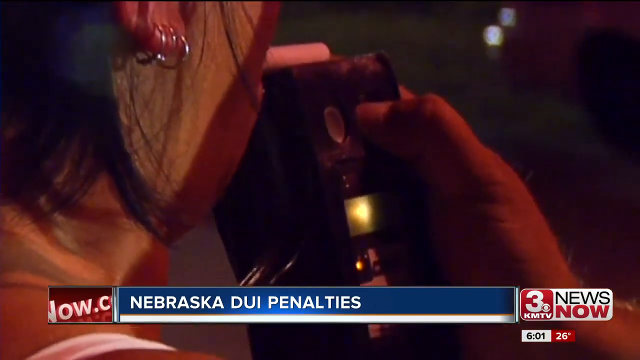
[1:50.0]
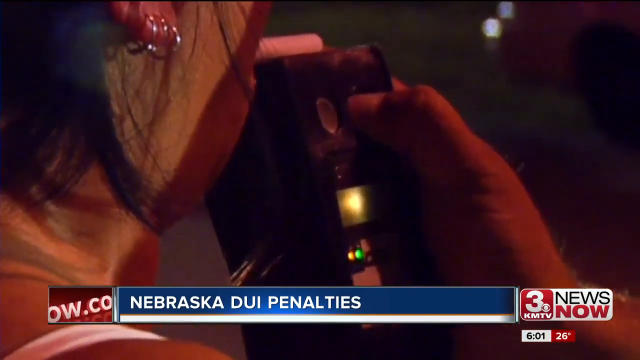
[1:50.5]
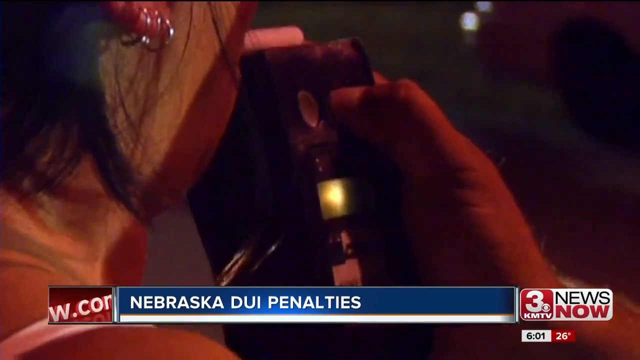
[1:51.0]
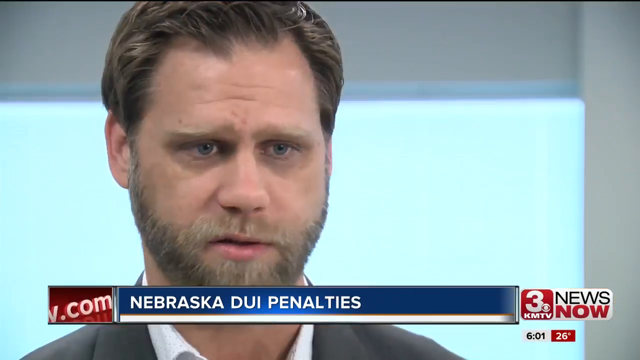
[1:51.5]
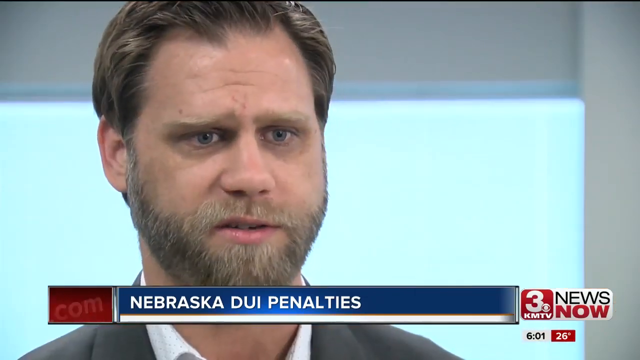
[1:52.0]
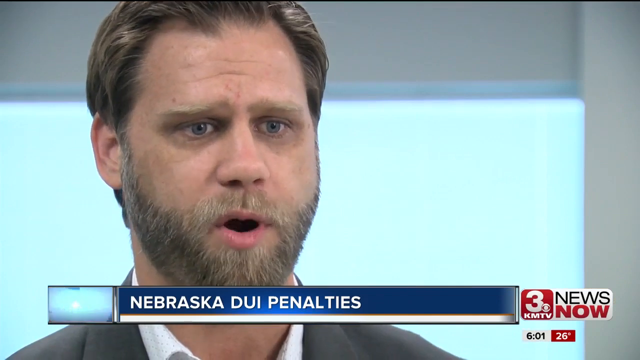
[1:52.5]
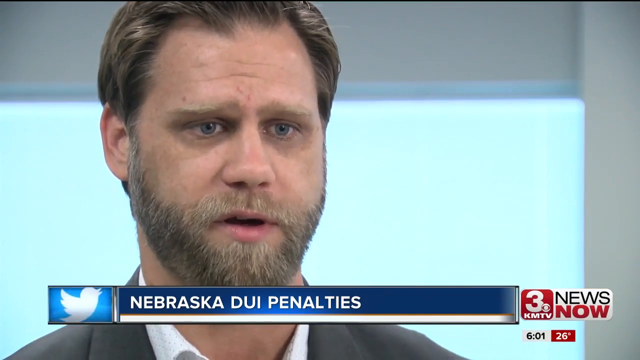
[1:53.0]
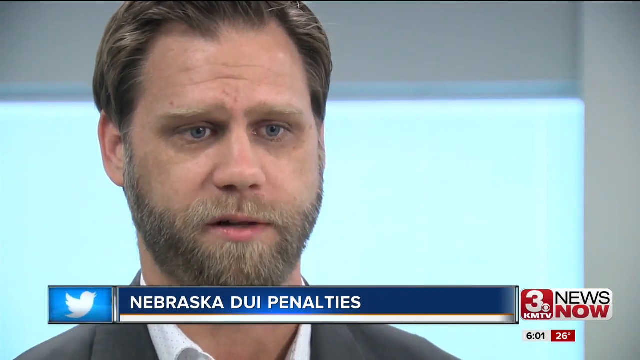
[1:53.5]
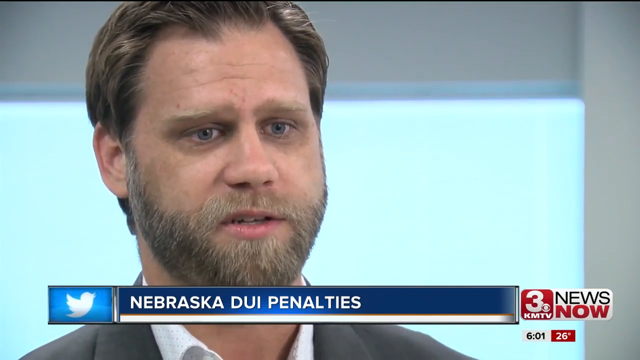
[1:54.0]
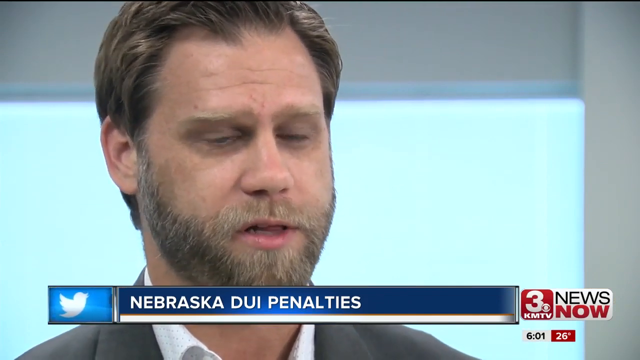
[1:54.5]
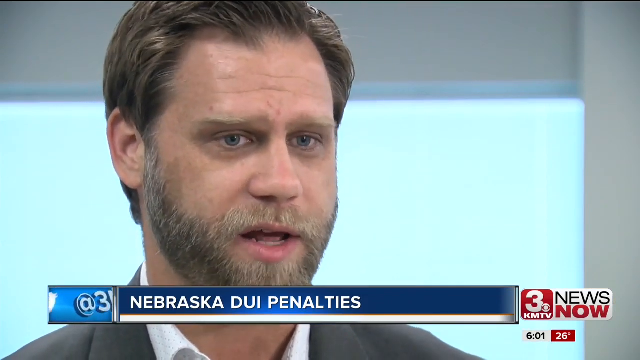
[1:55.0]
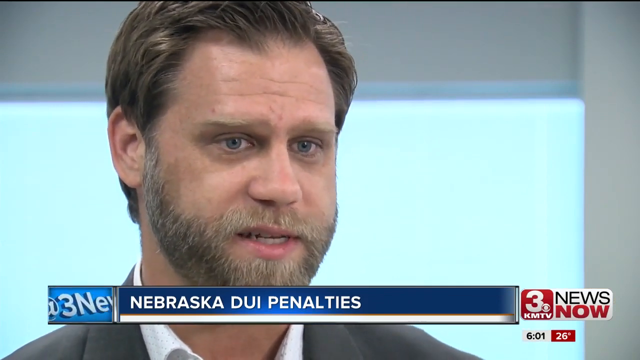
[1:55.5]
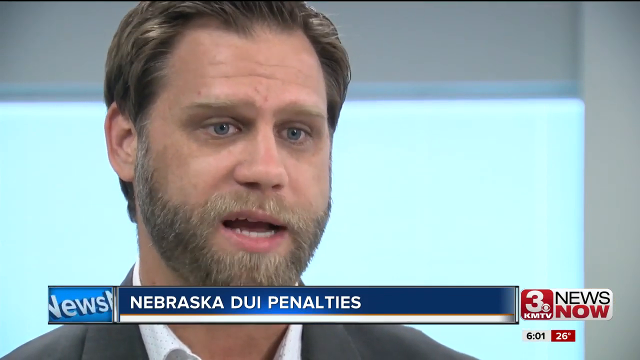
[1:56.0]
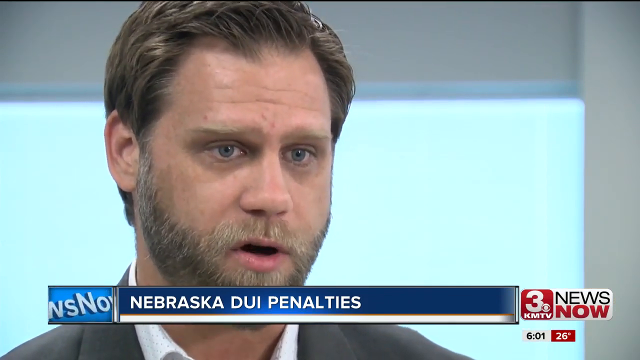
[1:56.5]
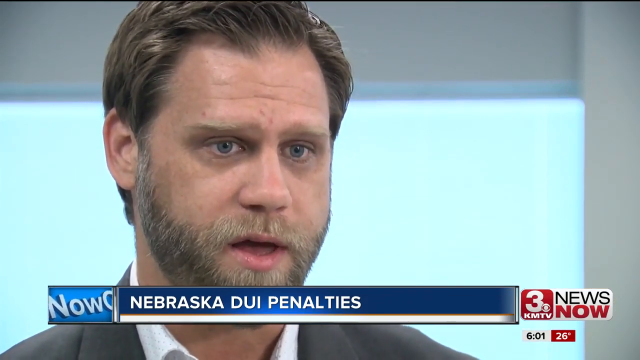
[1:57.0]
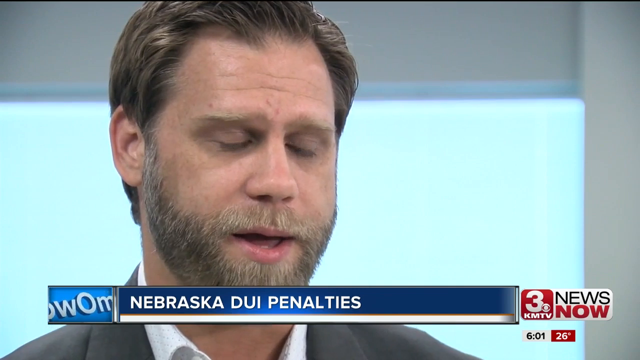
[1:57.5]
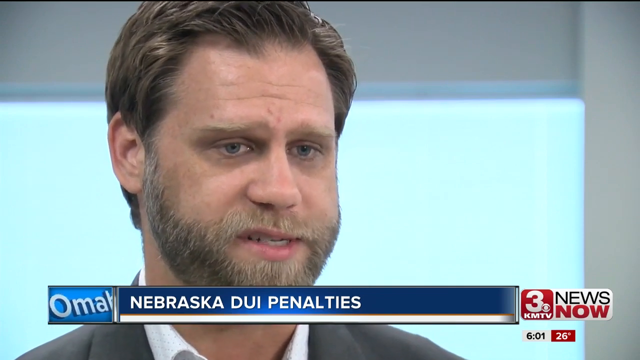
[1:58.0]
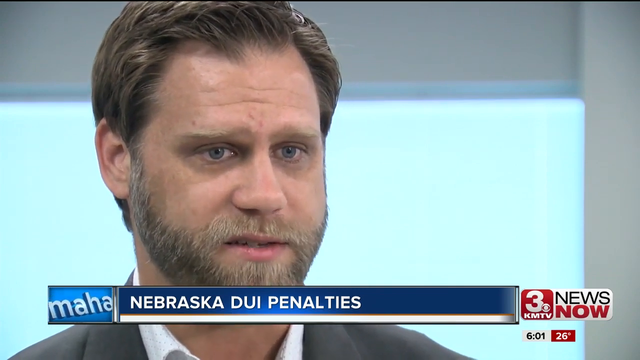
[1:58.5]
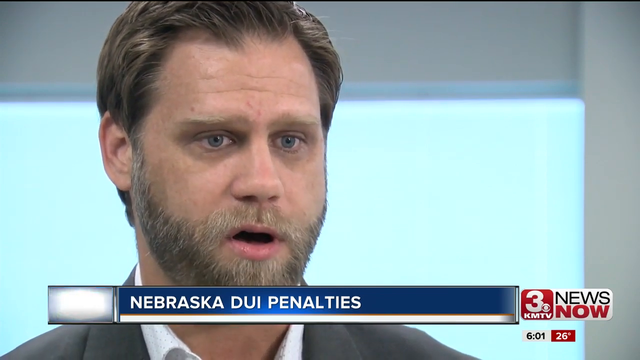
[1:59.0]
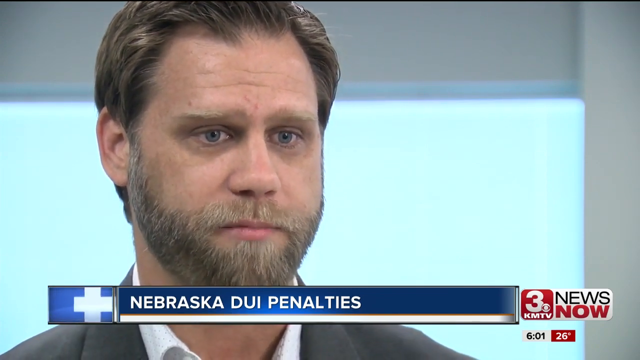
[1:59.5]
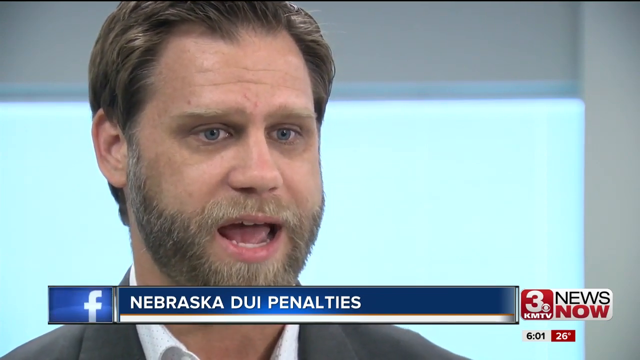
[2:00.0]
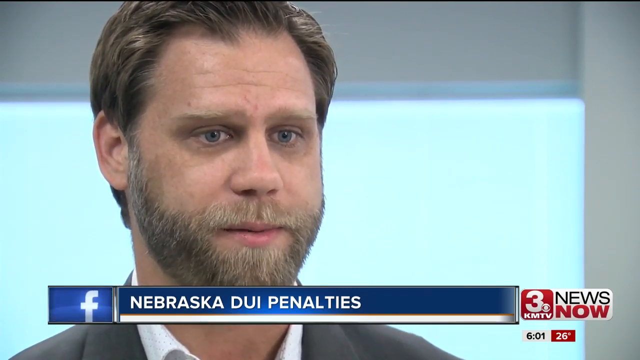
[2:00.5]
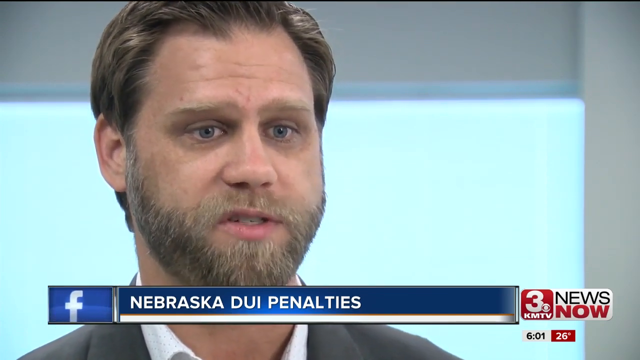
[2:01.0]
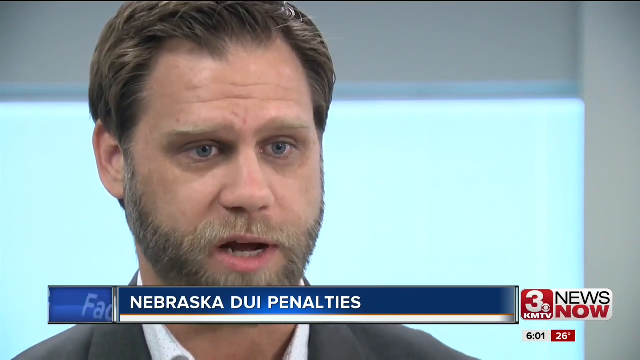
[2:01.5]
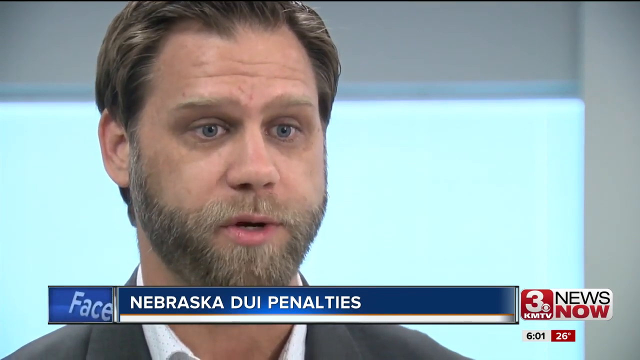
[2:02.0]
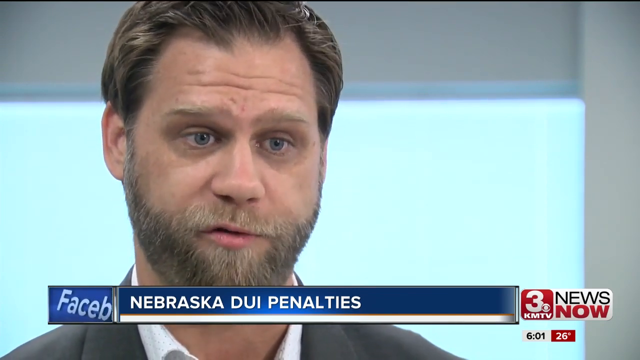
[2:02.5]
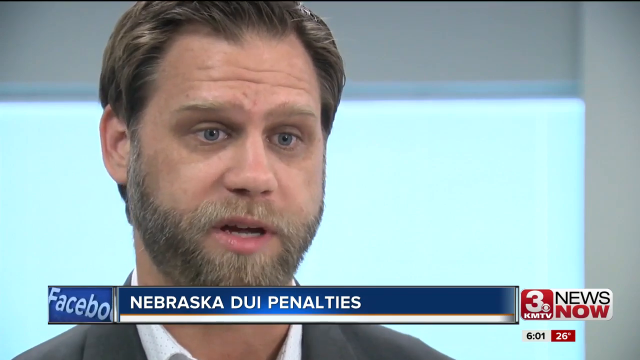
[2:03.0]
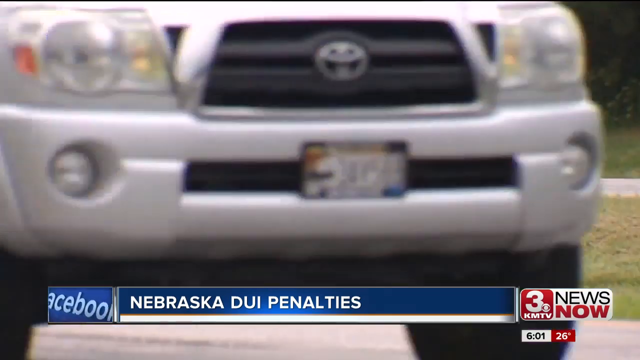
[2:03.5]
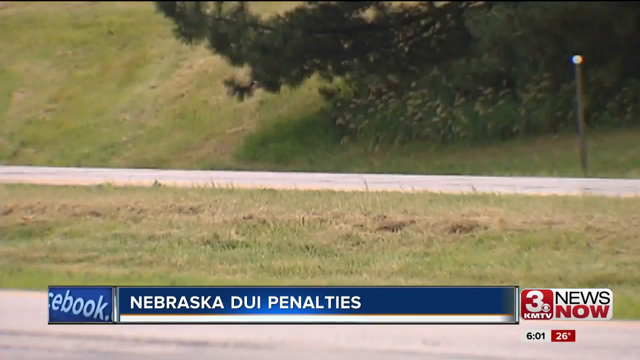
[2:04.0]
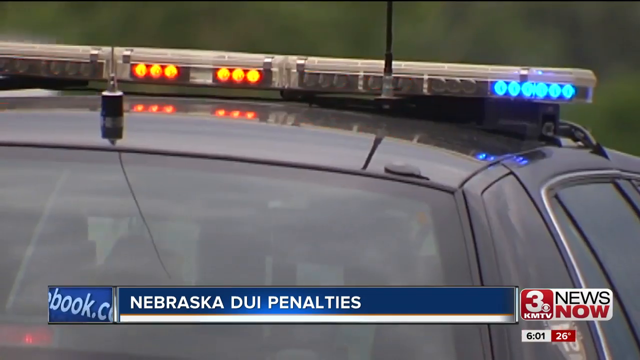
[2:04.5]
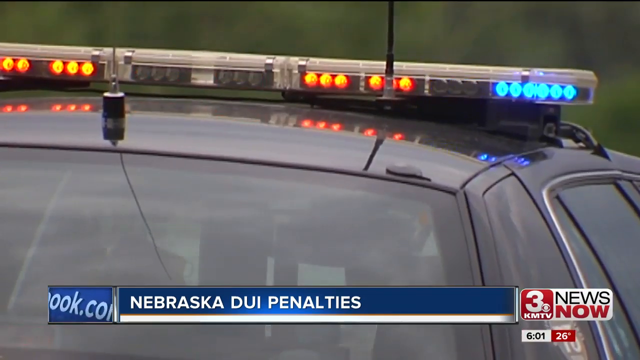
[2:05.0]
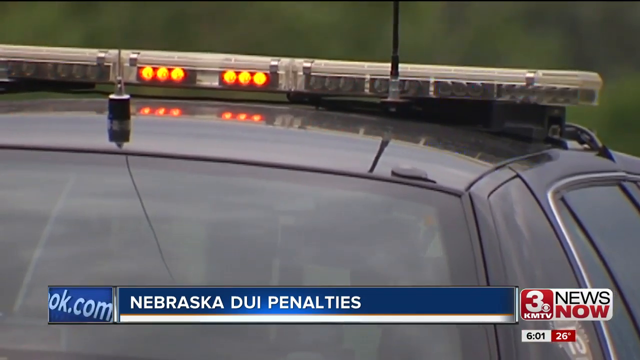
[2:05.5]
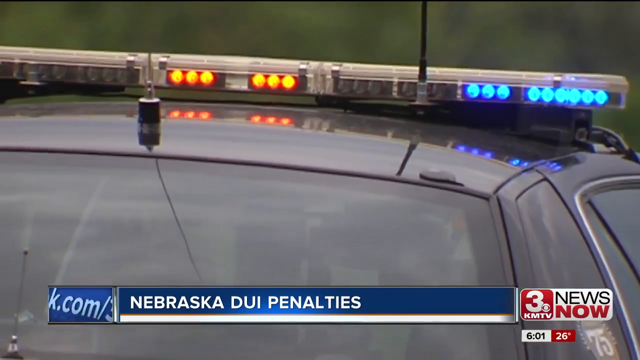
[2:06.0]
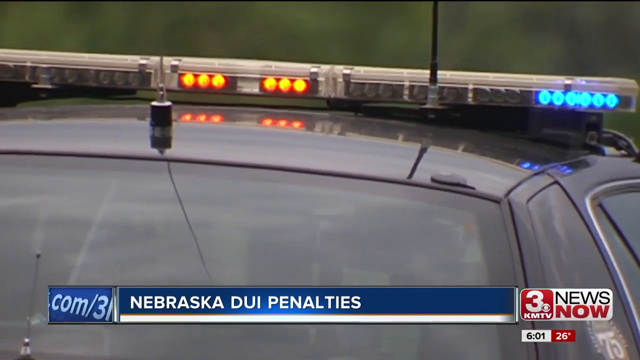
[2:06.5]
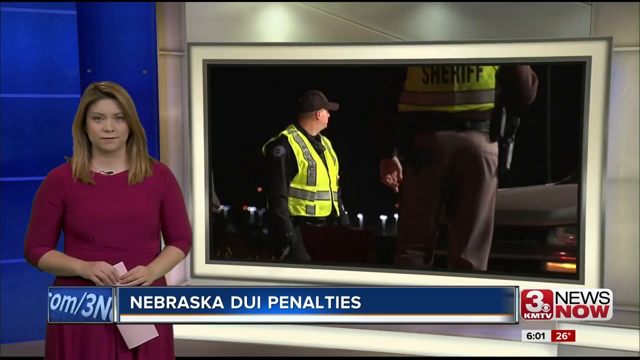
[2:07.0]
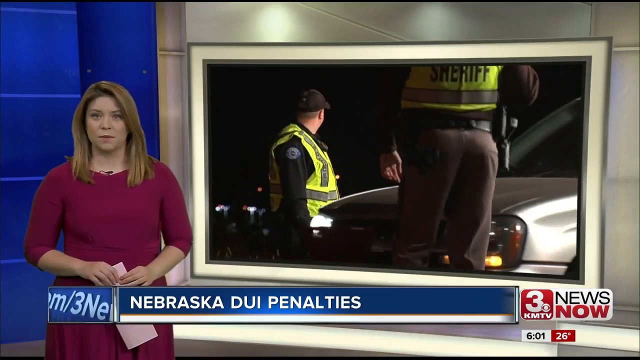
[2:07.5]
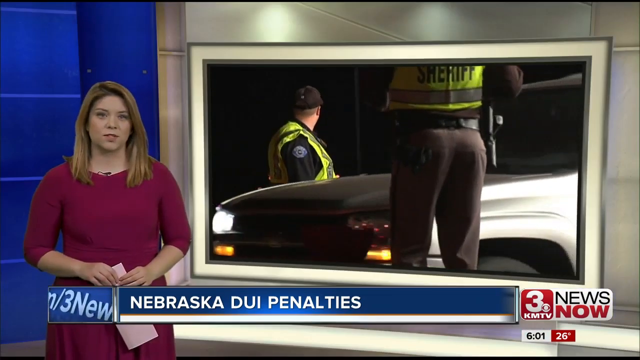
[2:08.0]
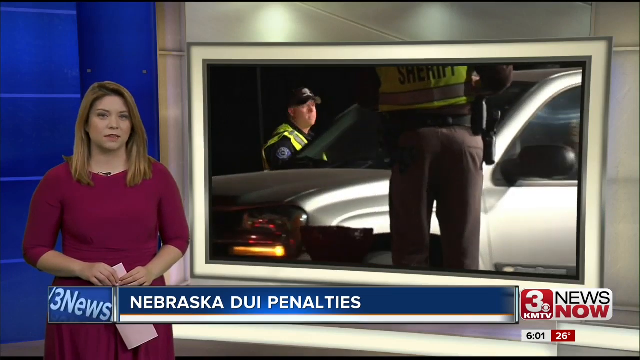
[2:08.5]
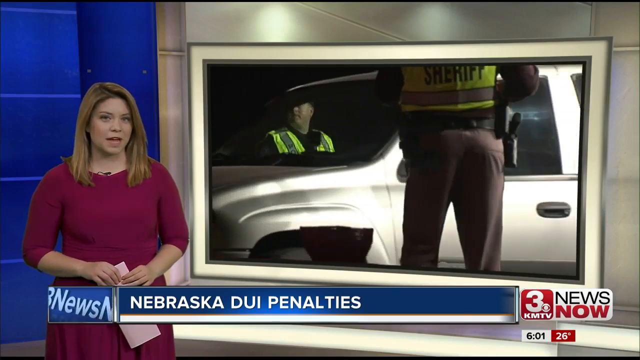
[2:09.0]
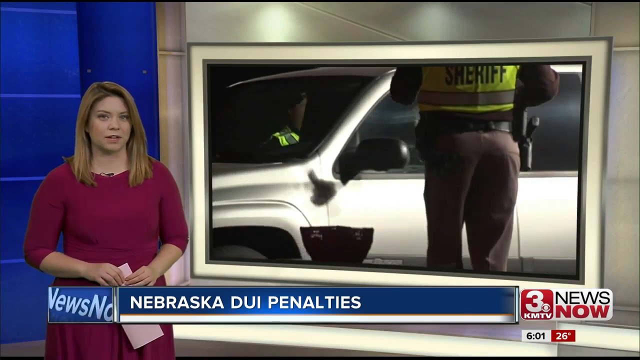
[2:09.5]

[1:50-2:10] The woman completes her breathalyser test. Another interviewee appears: a man probably about 40, with fair, shortish hair and a fair beard, frowning and wearing a grey suit jacket and a white shirt as he talks to the camera. He apparently is not named. Next is a police car at the roadside with its lights on, in daytime. The report returns to Ms Hahn in the studio, standing by her monitor, which shows sheriff's deputies pulling a silver car over; one deputy has a gun at his right hip.